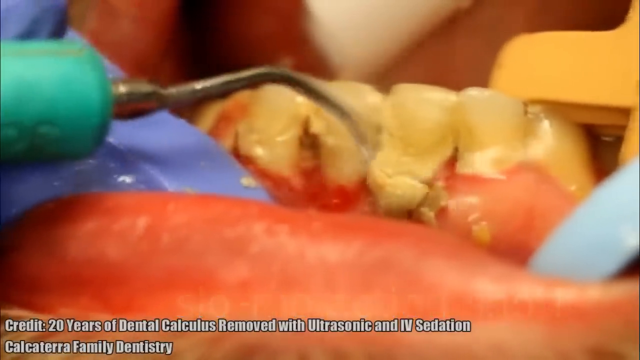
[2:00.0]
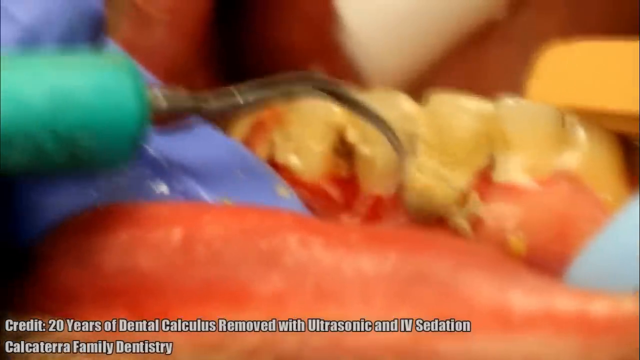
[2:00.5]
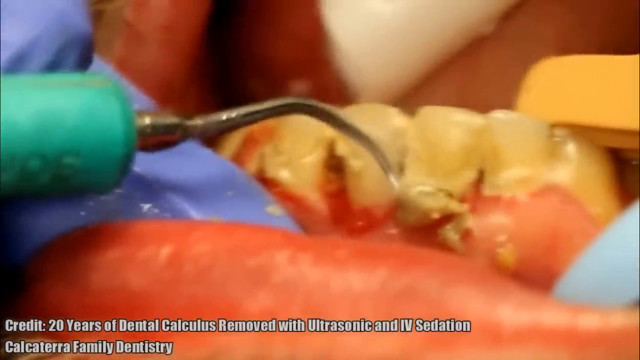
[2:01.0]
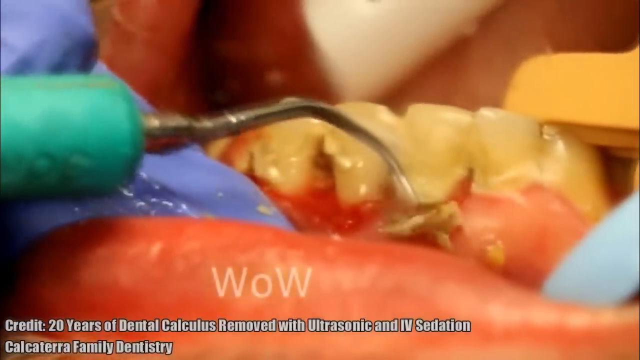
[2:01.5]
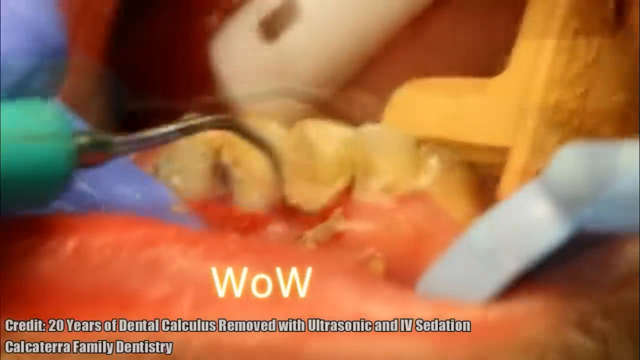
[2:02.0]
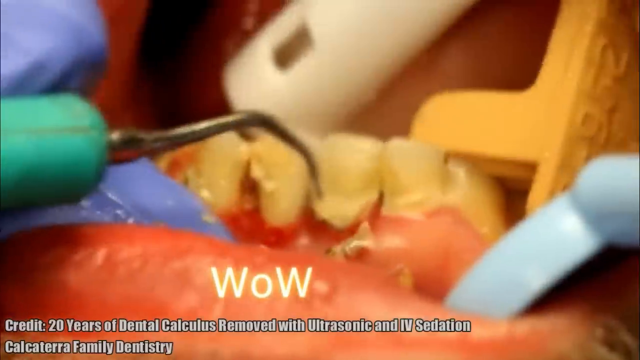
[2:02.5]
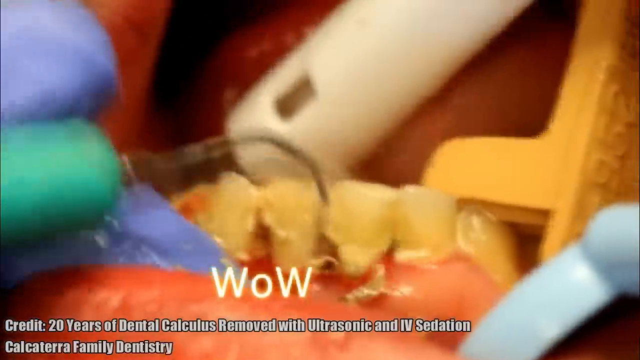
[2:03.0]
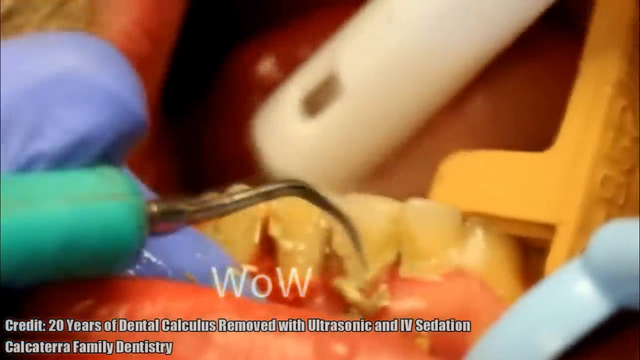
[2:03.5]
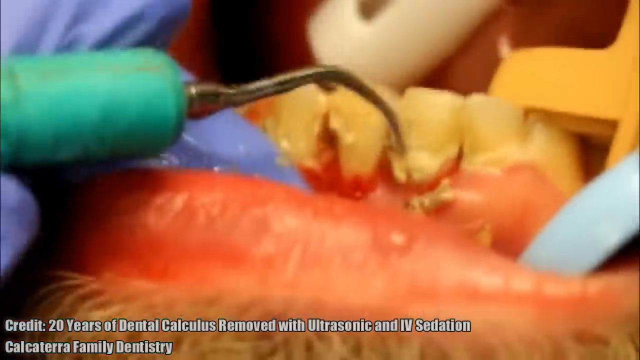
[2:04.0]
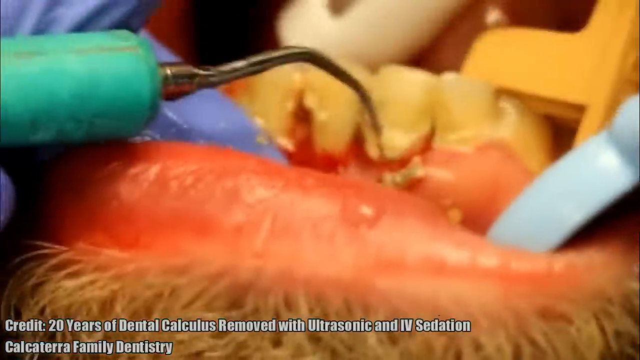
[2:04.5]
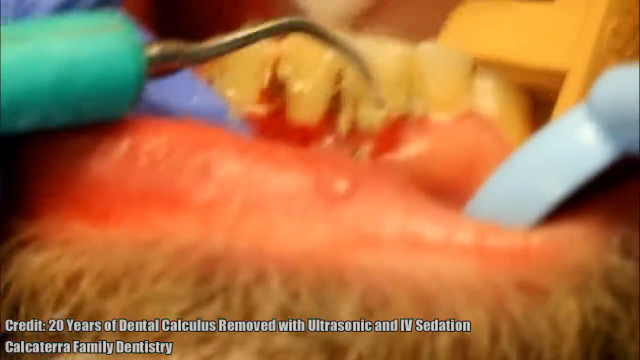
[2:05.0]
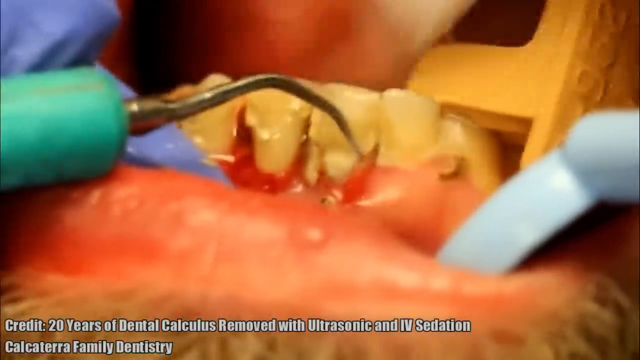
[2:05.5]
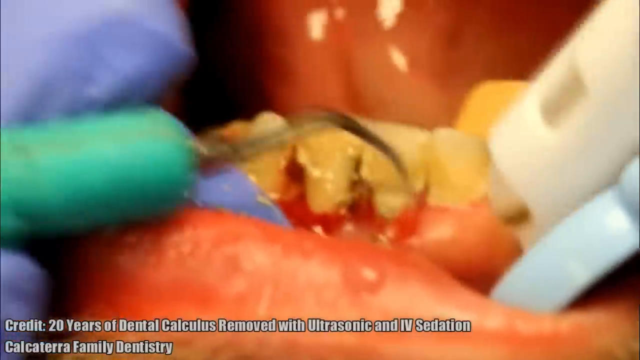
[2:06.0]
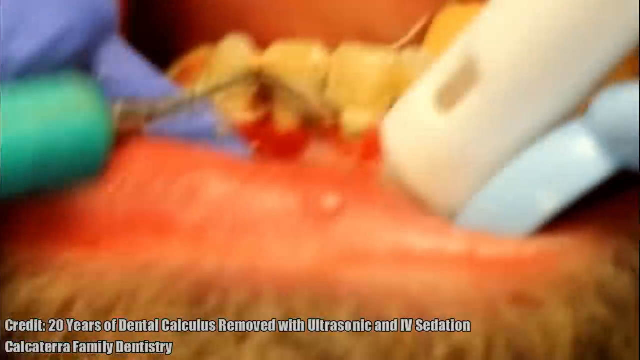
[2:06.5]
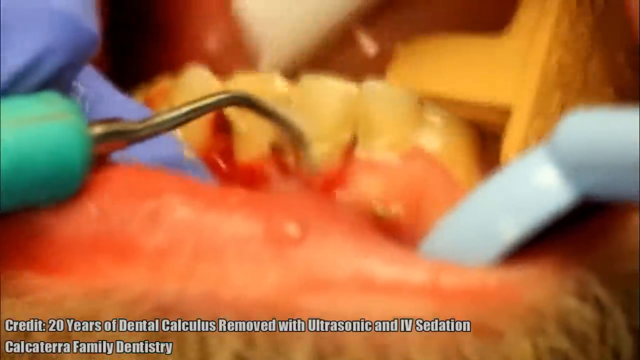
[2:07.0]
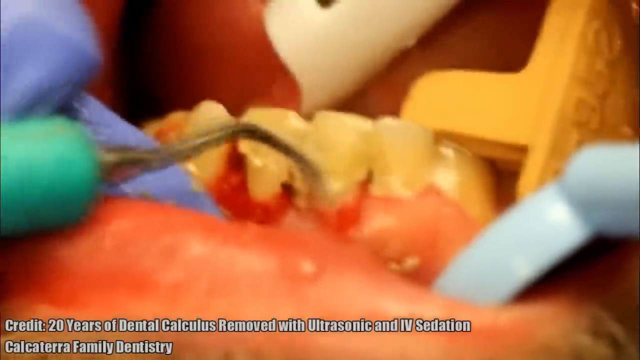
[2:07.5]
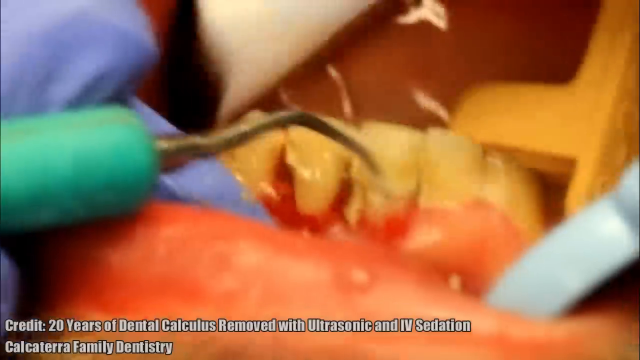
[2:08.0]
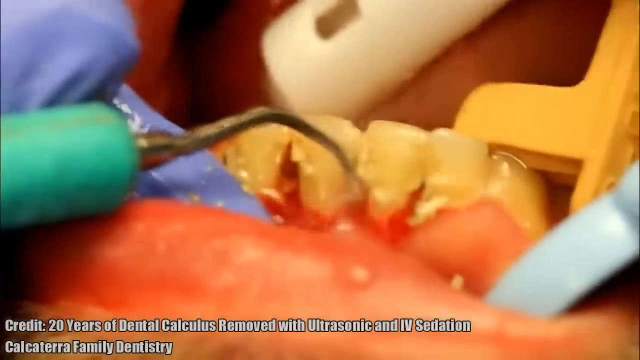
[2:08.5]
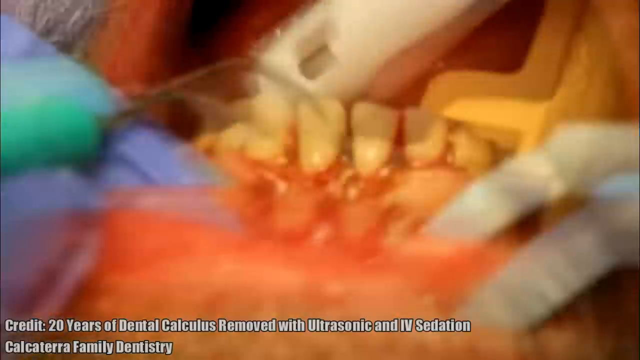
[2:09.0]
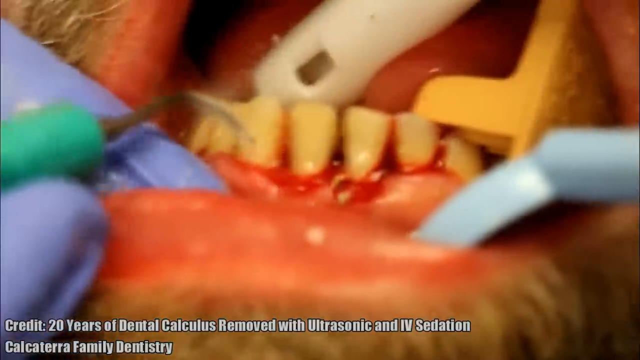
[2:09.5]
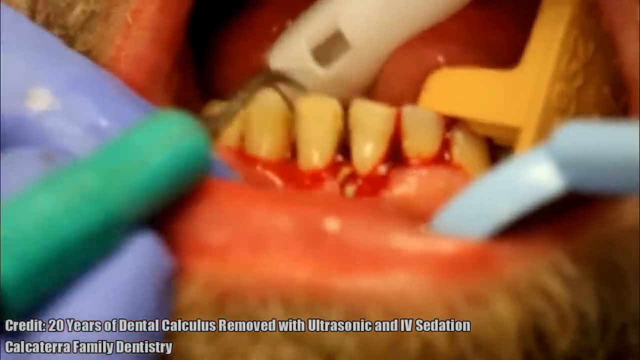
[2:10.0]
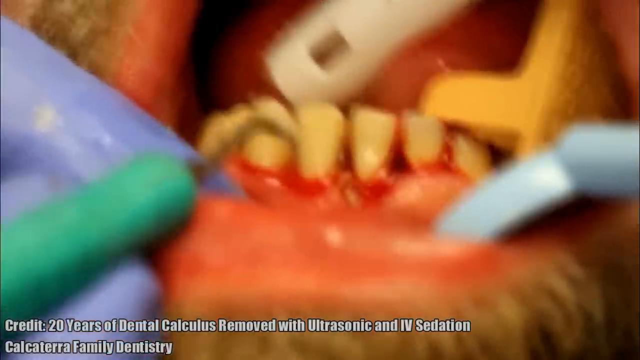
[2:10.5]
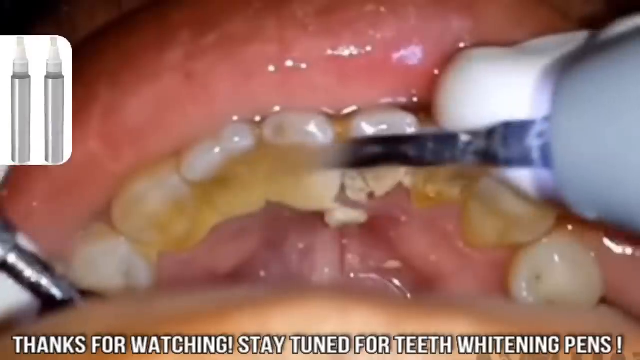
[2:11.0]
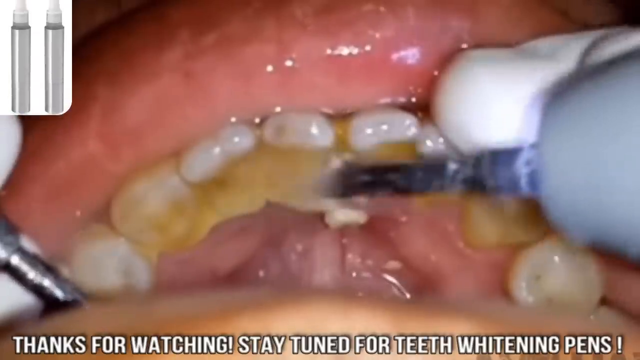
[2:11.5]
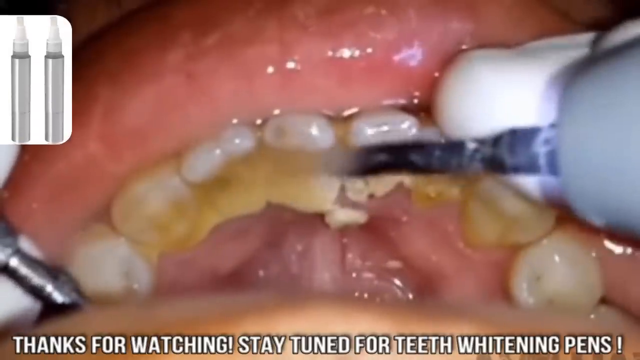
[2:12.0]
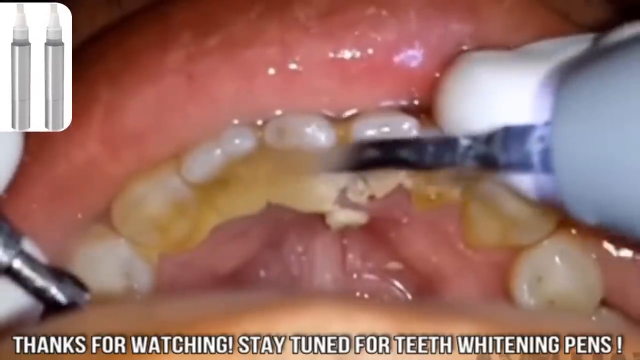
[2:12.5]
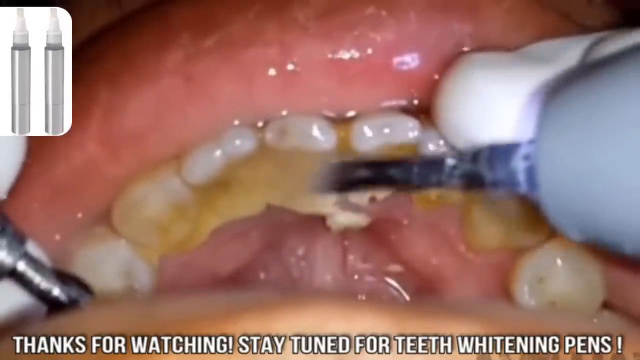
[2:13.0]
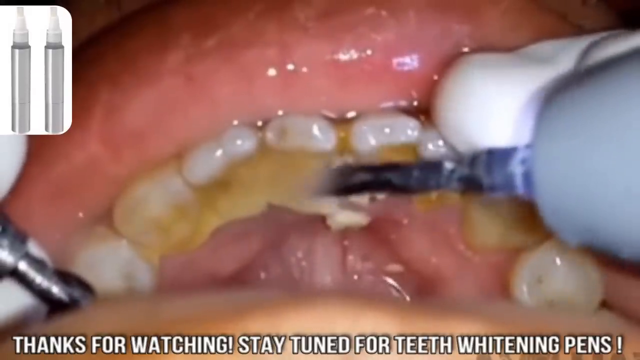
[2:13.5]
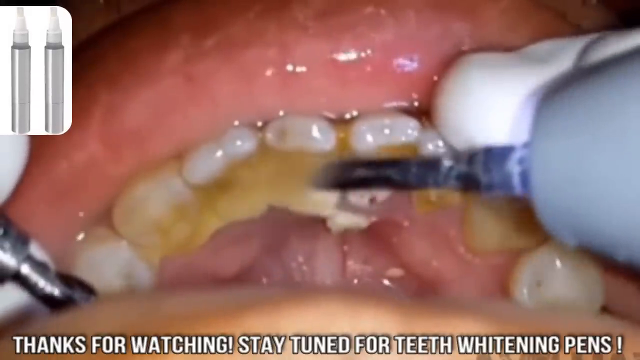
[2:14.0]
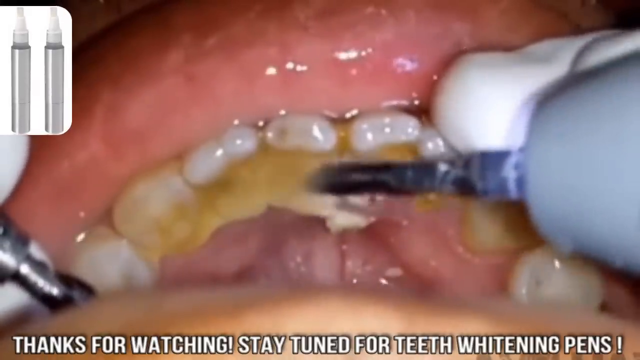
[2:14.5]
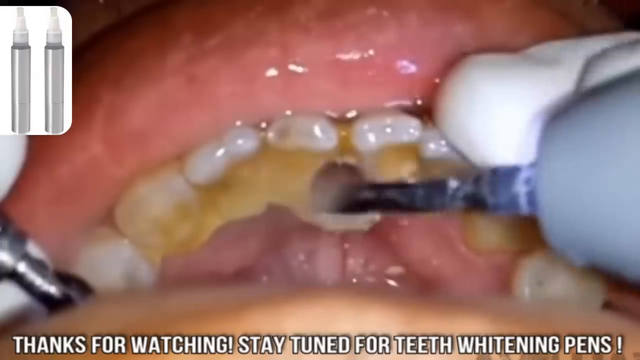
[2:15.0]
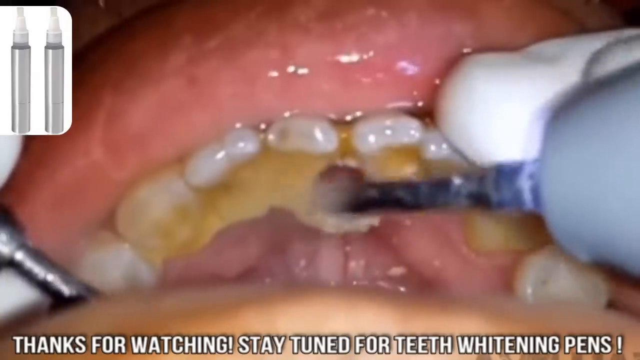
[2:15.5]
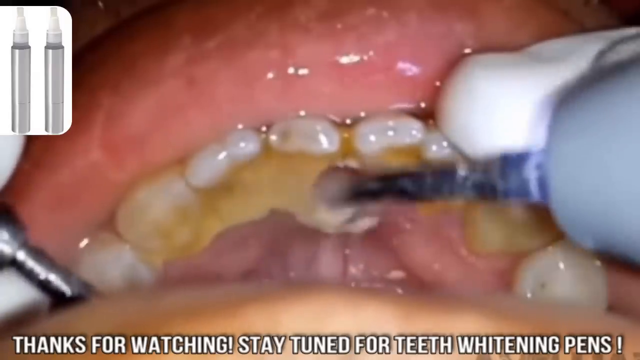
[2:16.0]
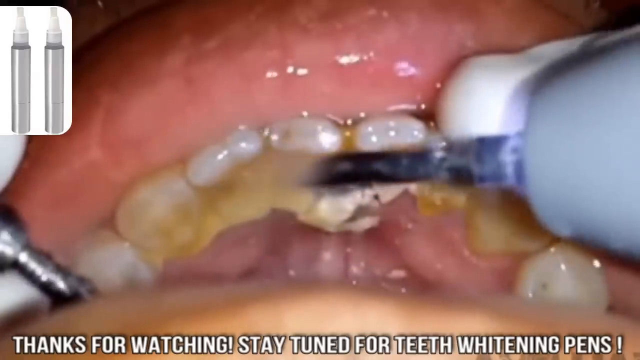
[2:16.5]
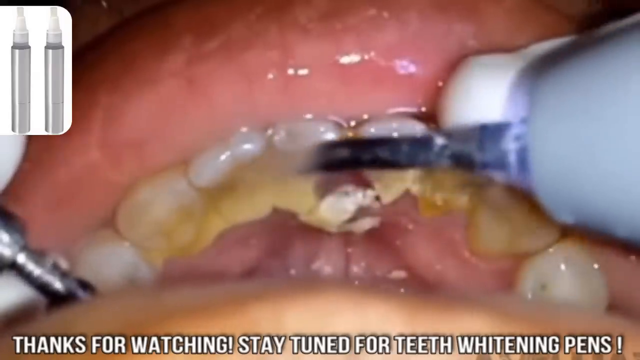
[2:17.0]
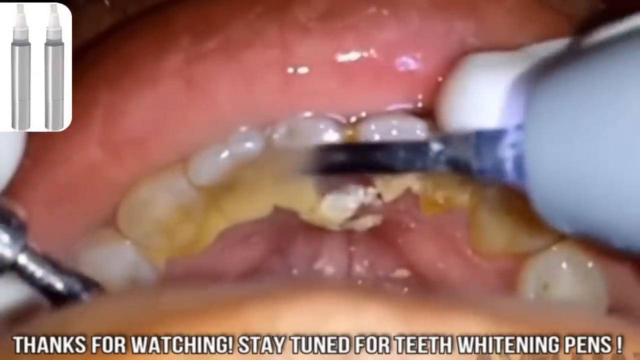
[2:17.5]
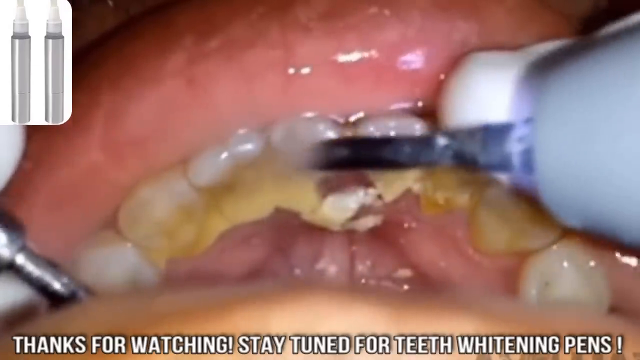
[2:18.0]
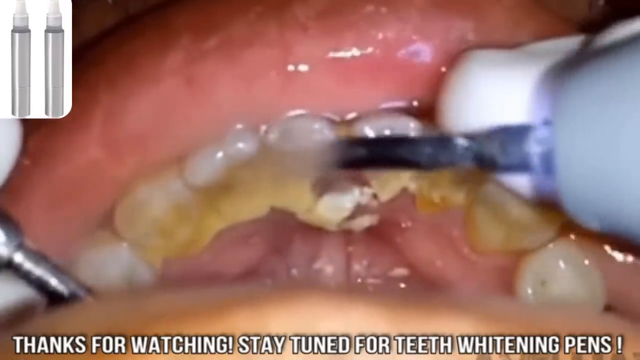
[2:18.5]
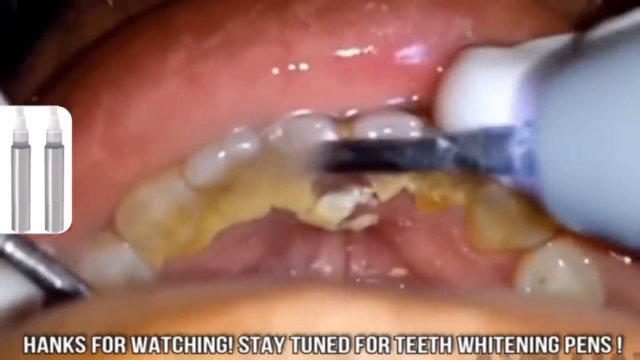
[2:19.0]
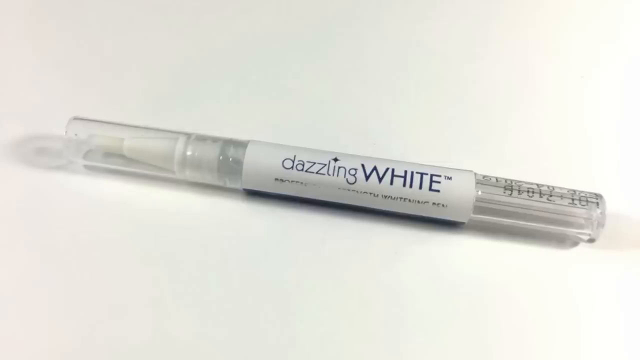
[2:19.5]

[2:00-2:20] The gloved hands of a dental assistant or dentist hold a pick that takes off large slabs of tartar. Text on the person's lips below the cleaning says "WOW," along with a credit that says "20 years of dental calculus removed with ultrasonic and IV sedatives from Calcaterra Family Dentistry." Other tools placed inside the mouth seem to help keep it open for a better look inside. The person has a beard growing underneath the bottom lip. Lots of blood appears when most of the tartar is removed. Another image shows the whitening pens that the video's creator seems to be trying to sell. Footage of the large pieces of tartar from the back teeth shown earlier is shown again.